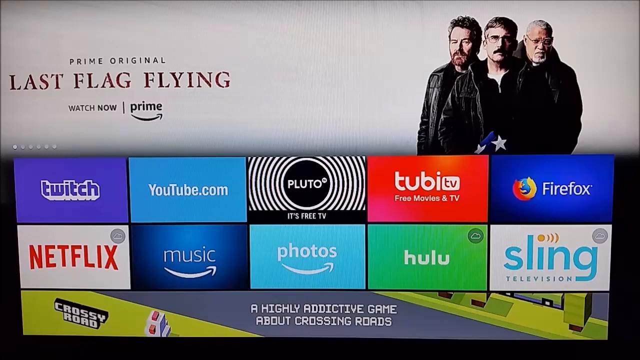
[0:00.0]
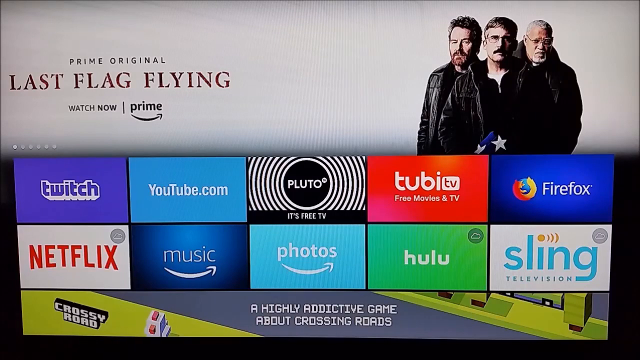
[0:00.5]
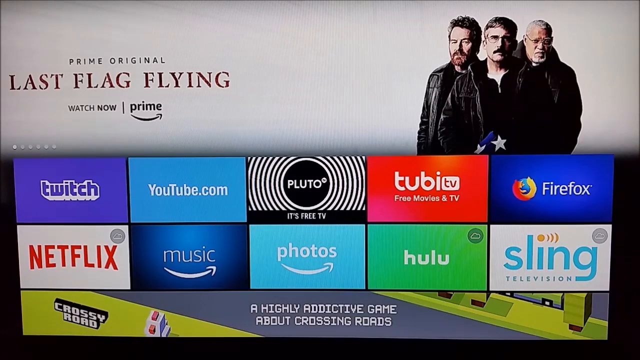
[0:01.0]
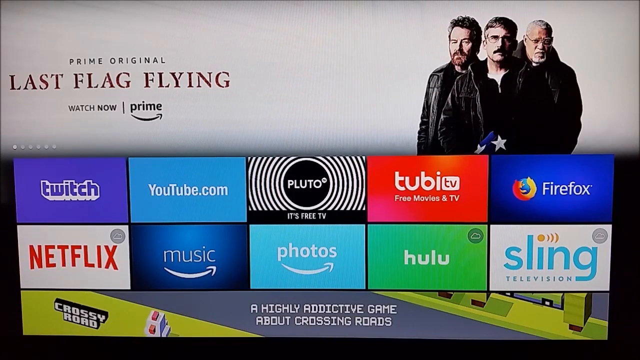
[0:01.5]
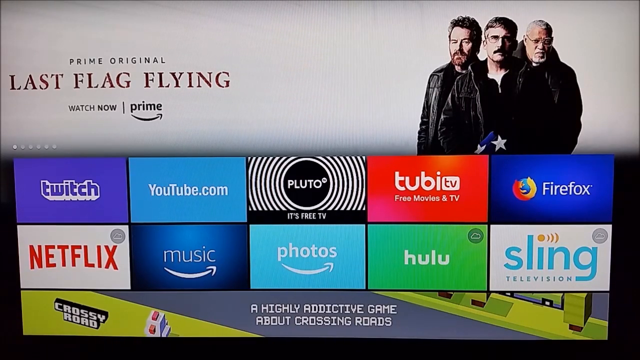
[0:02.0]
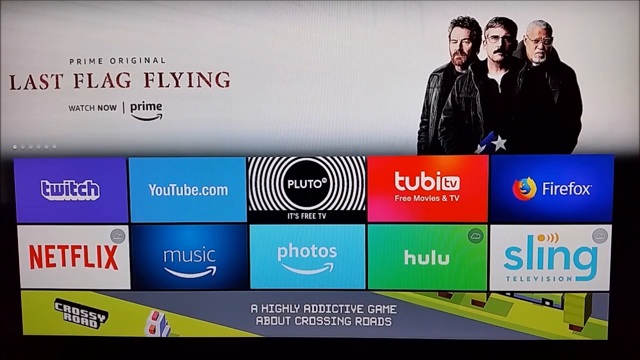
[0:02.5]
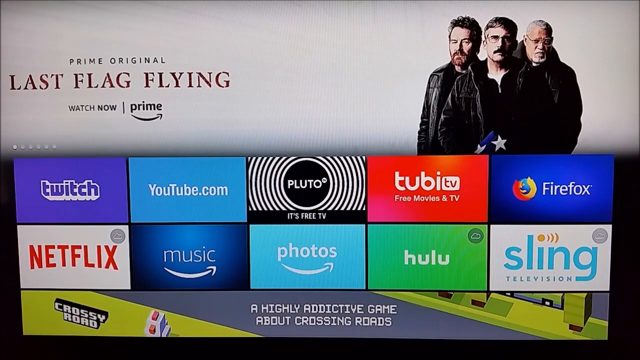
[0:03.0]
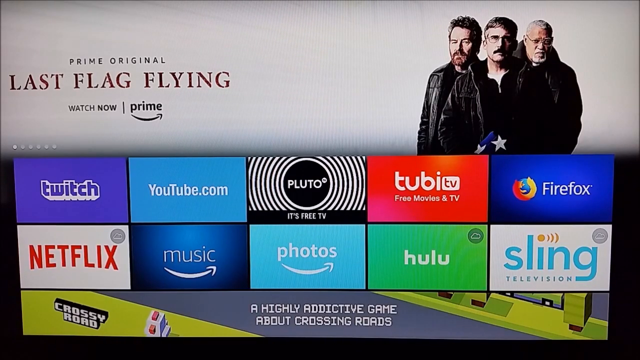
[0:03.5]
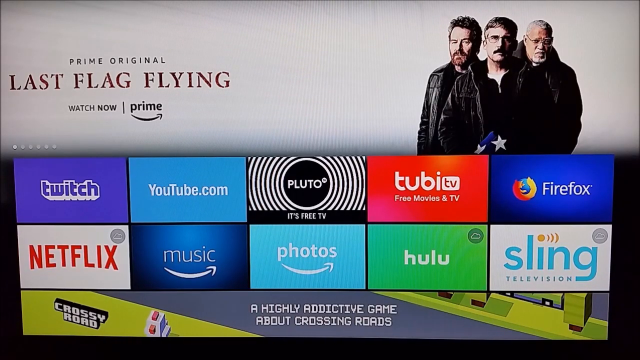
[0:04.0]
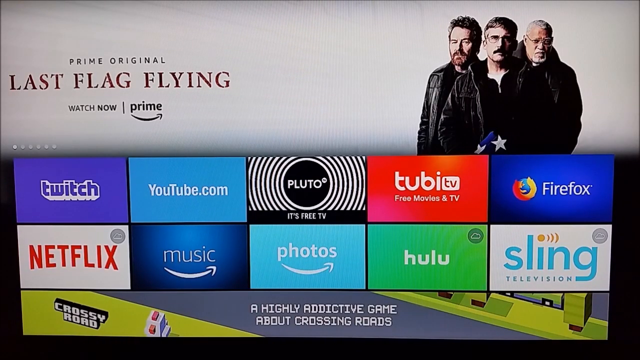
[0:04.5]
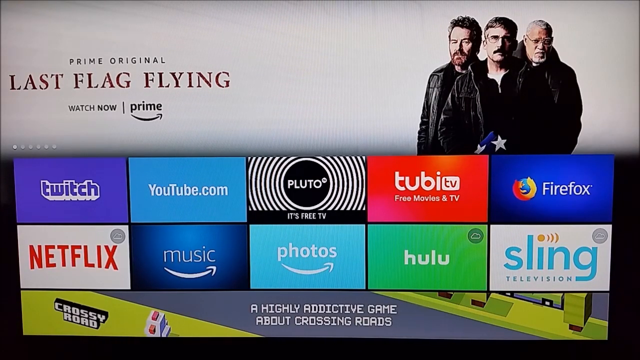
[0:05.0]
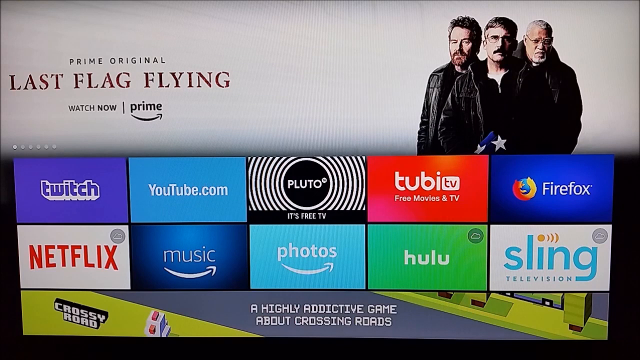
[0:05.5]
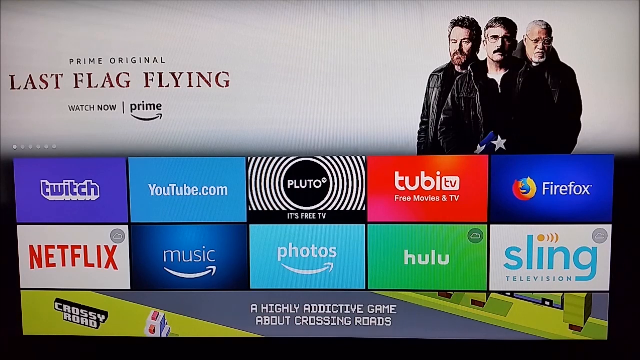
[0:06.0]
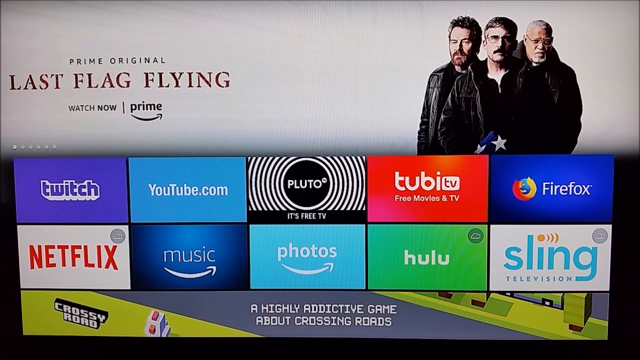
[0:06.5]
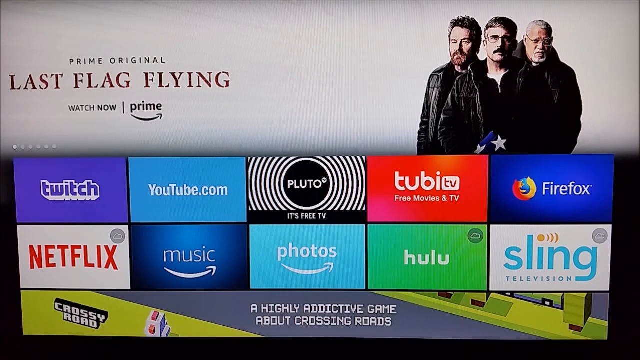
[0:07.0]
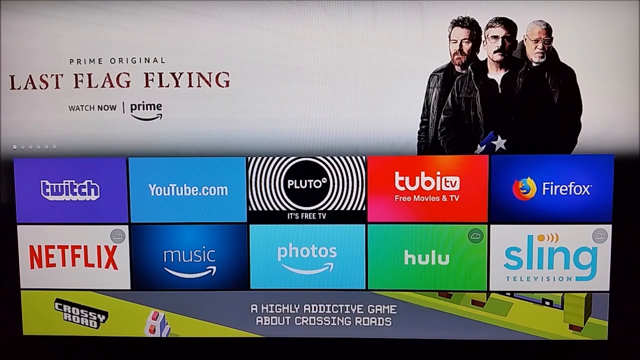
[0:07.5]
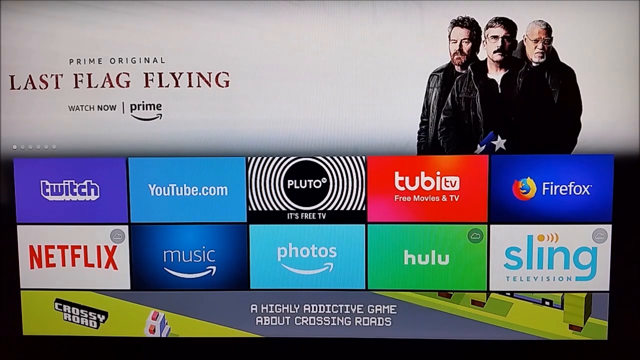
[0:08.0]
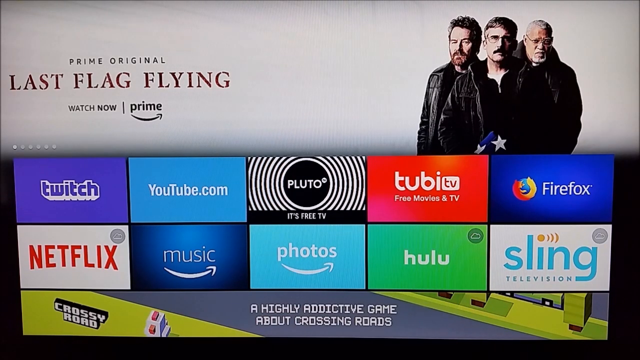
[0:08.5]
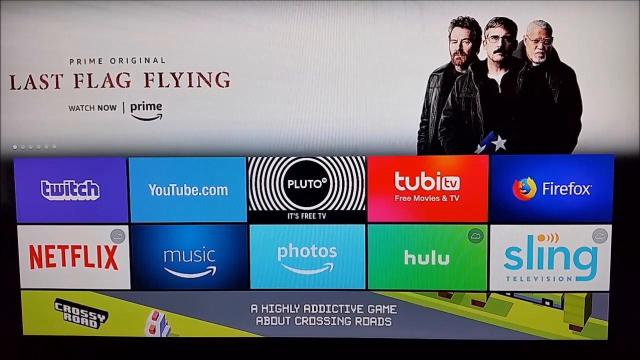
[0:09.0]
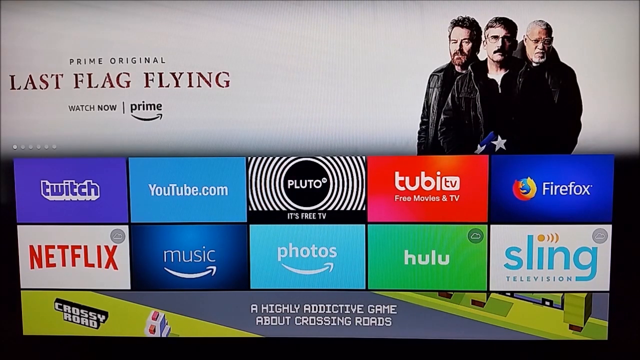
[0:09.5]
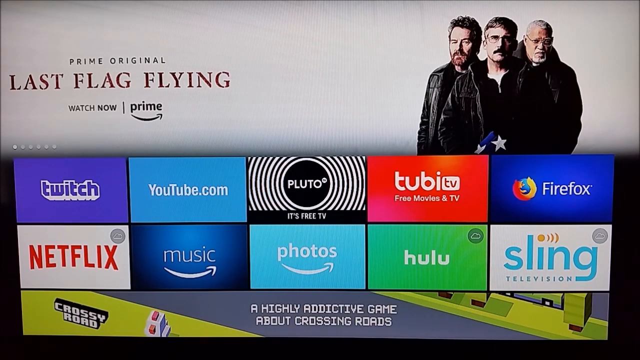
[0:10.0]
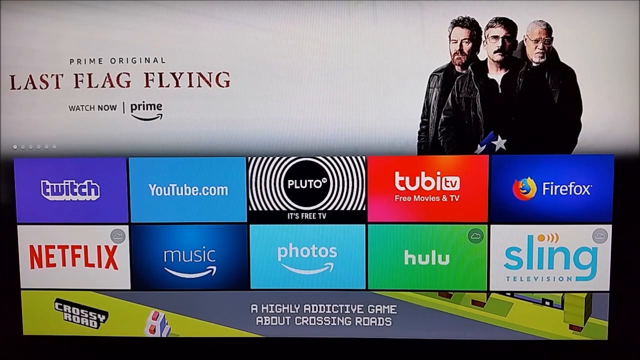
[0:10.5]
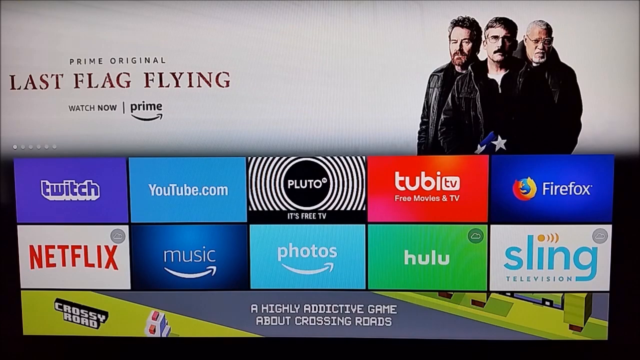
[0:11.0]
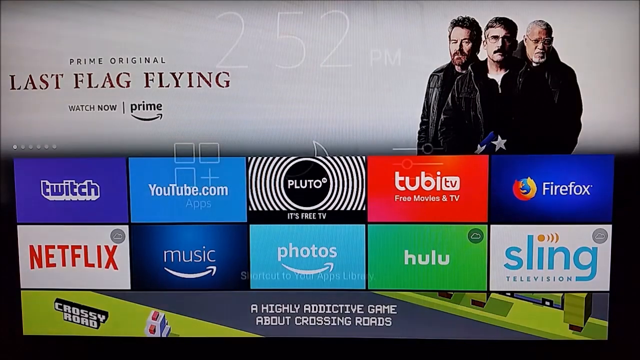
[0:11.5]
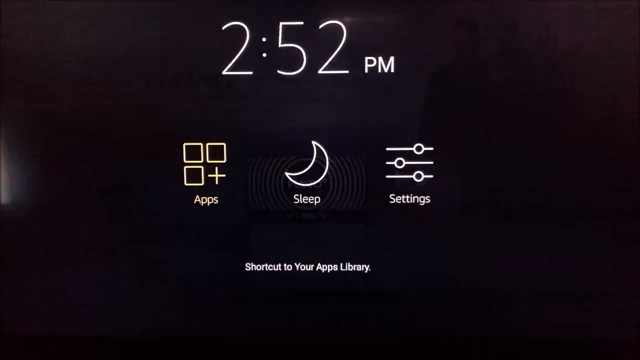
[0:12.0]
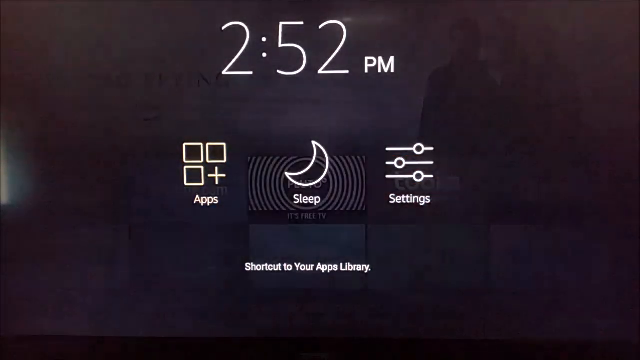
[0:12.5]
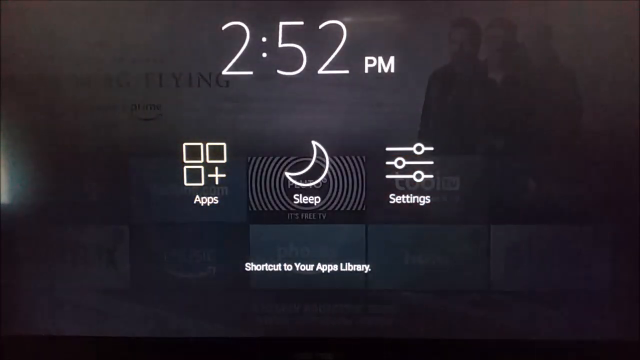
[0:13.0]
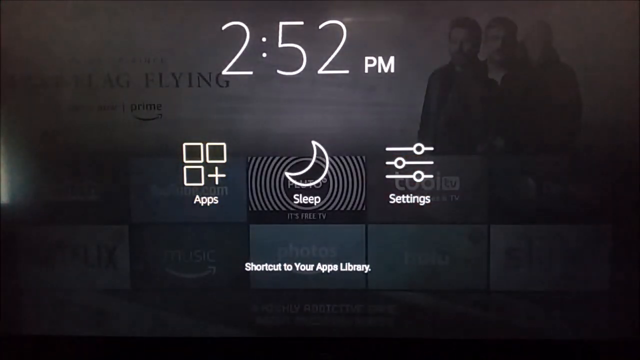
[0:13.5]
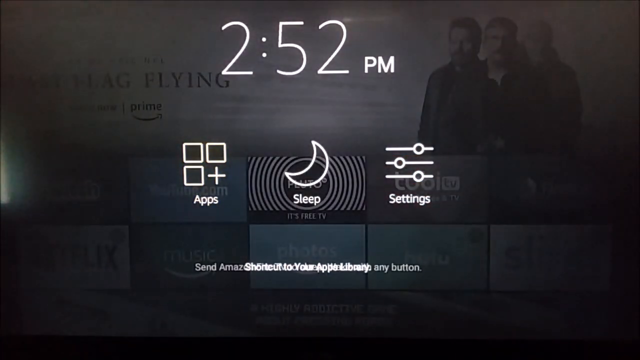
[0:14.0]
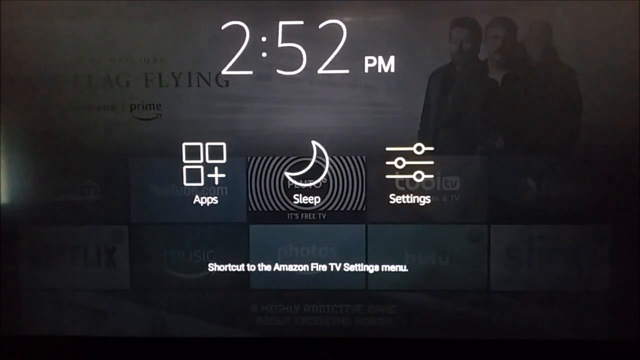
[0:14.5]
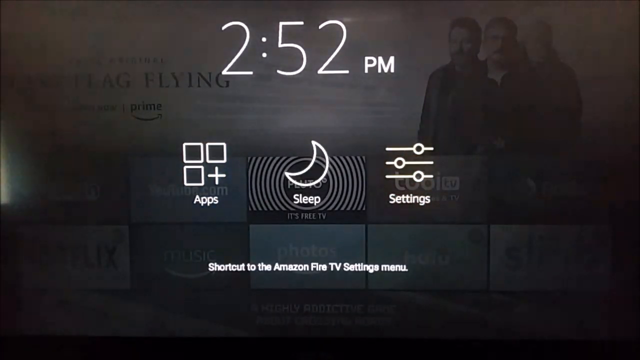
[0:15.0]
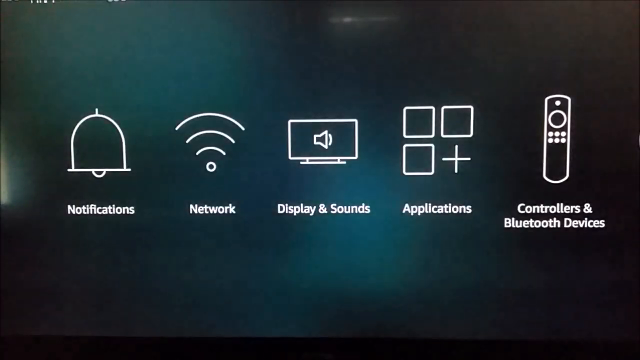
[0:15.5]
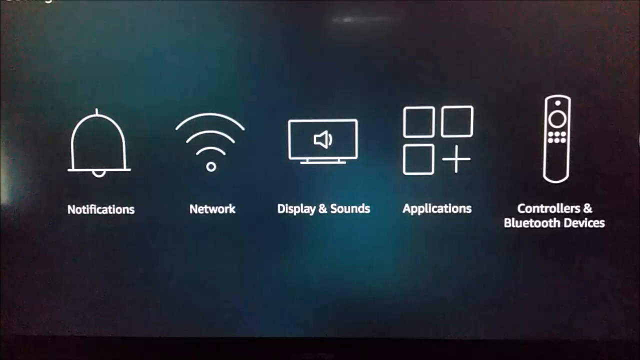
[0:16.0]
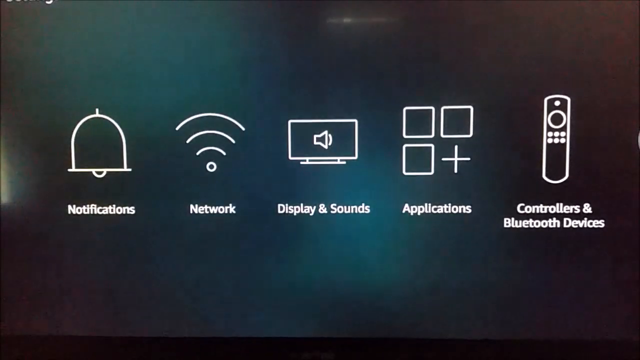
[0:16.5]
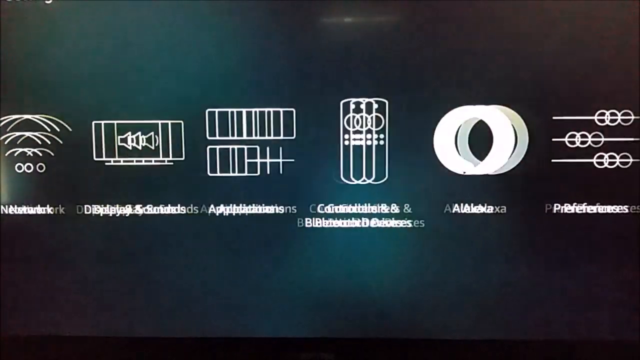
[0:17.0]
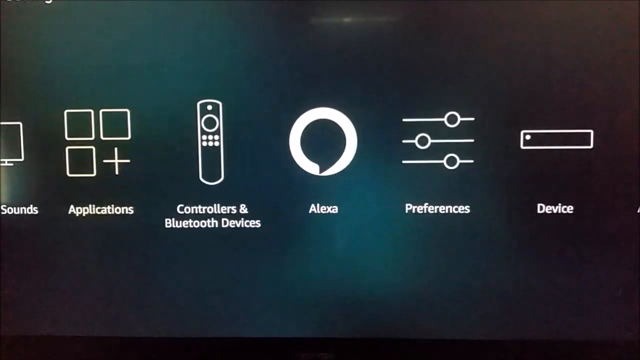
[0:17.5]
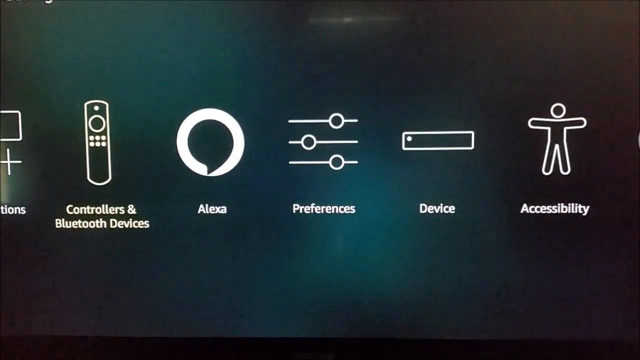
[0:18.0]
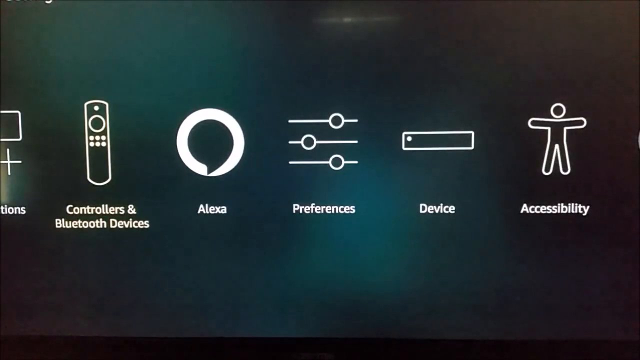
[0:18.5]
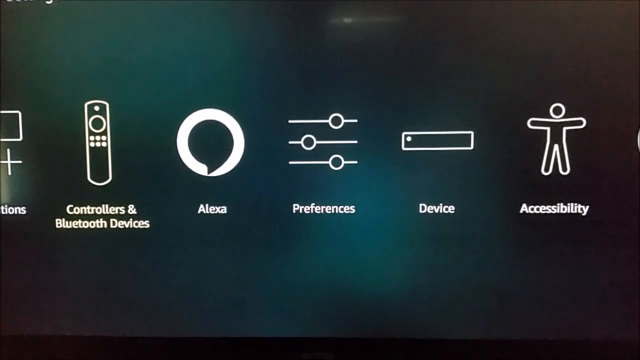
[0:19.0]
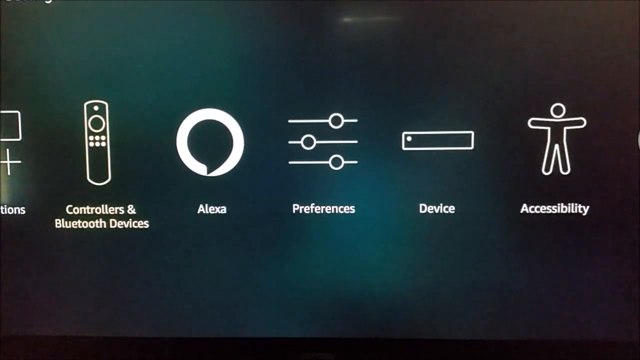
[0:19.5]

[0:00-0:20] A smart TV interface displays various movie channels and apps, and the user apparently navigates through the settings. The row of apps includes YouTube, Pluto, Tubi TV, Mozilla Firefox, Netflix, Amazon Music, Amazon Photos, Hulu and Sling Television. In the background is a Prime Original, "Last Flag Flying," apparently an Amazon Prime movie, showing three men. The owner navigates through the sources to select what they need, and apparently does not watch the movie.